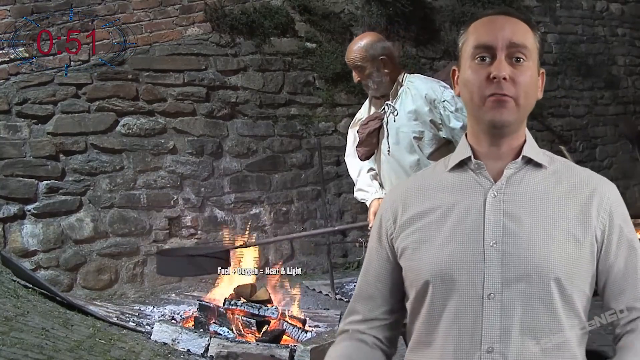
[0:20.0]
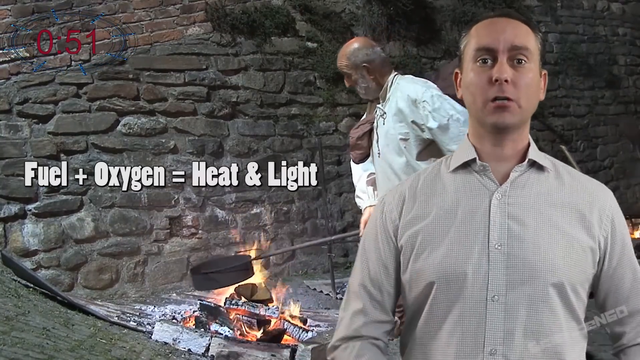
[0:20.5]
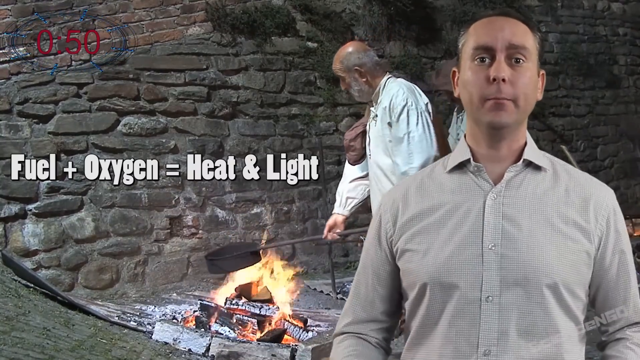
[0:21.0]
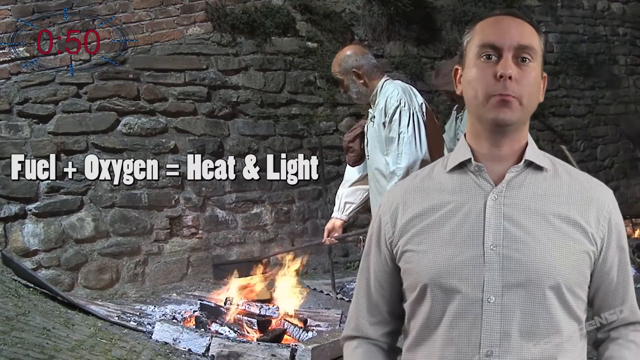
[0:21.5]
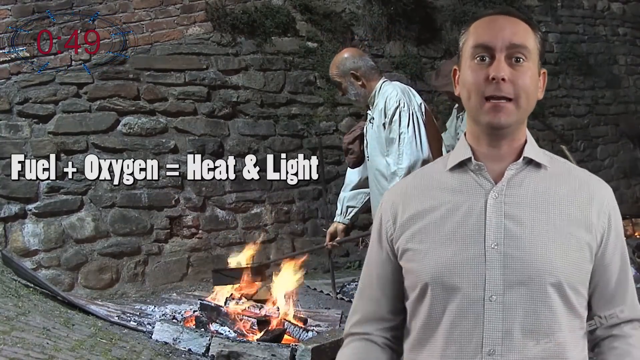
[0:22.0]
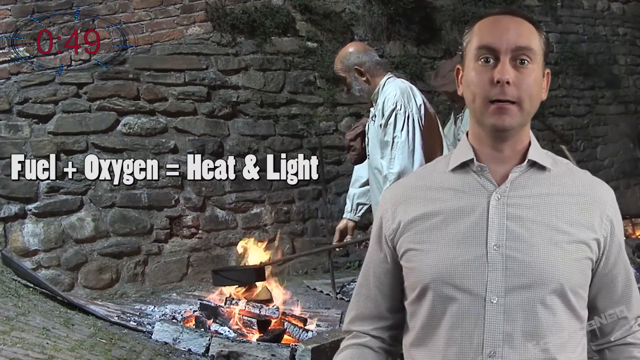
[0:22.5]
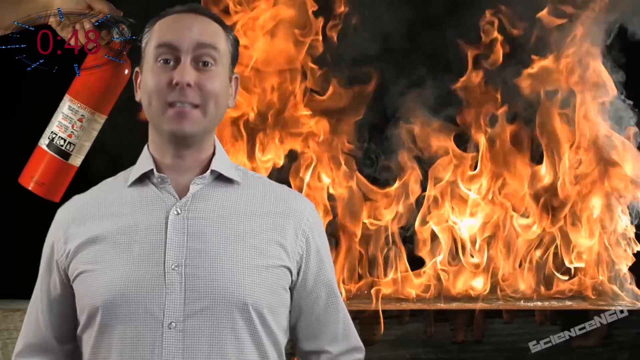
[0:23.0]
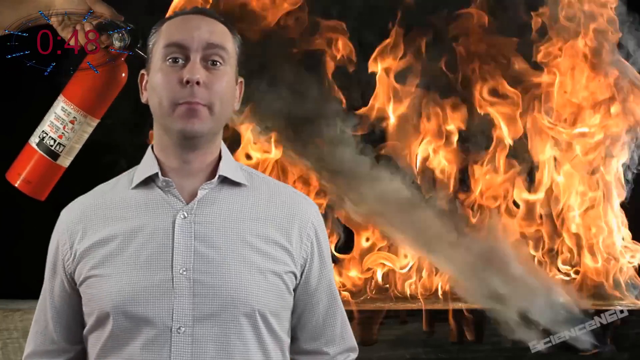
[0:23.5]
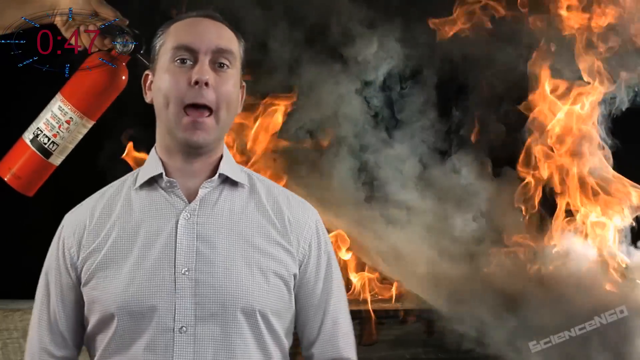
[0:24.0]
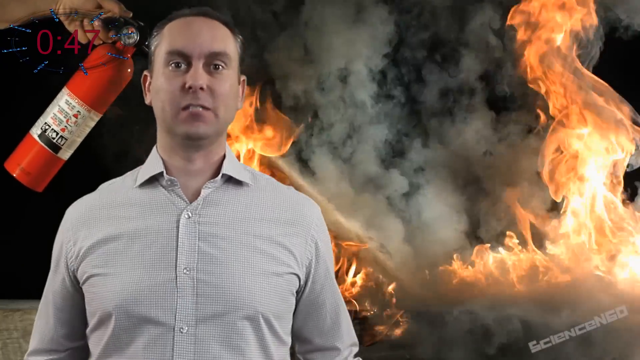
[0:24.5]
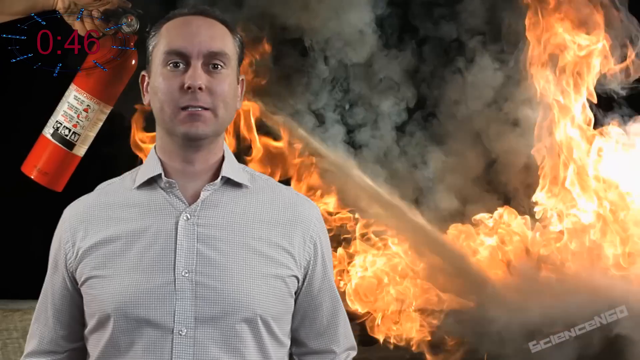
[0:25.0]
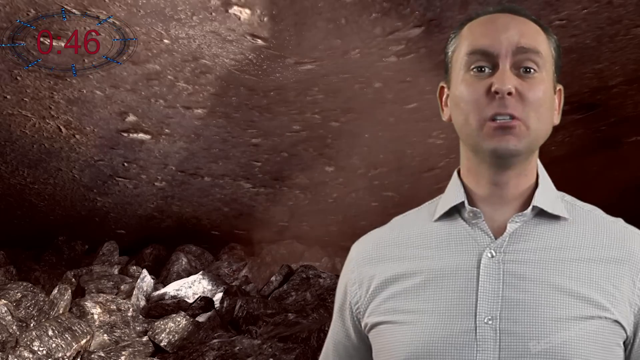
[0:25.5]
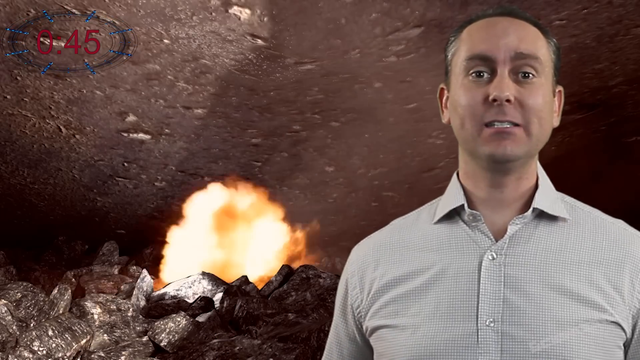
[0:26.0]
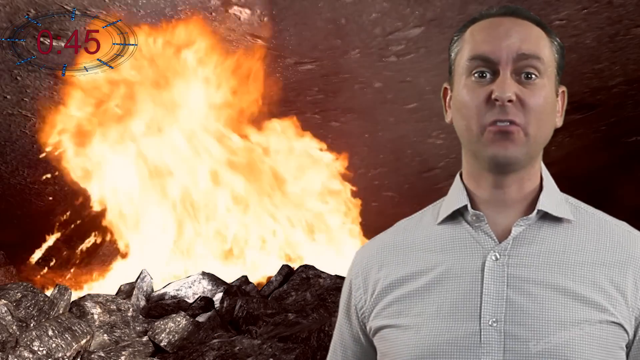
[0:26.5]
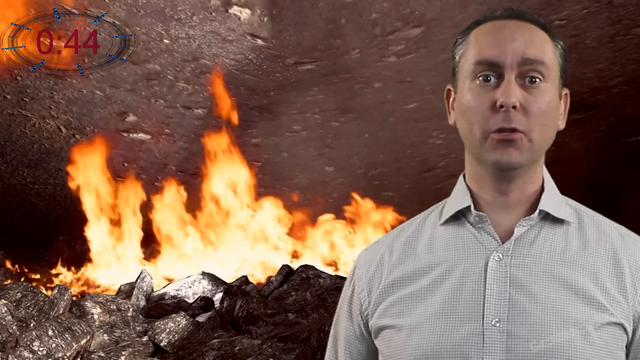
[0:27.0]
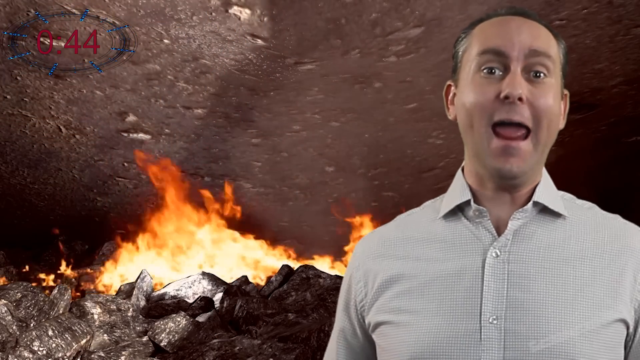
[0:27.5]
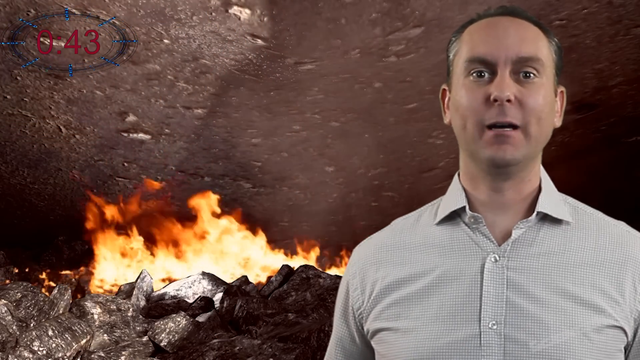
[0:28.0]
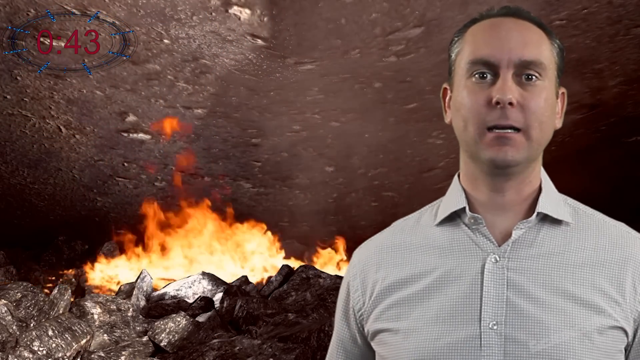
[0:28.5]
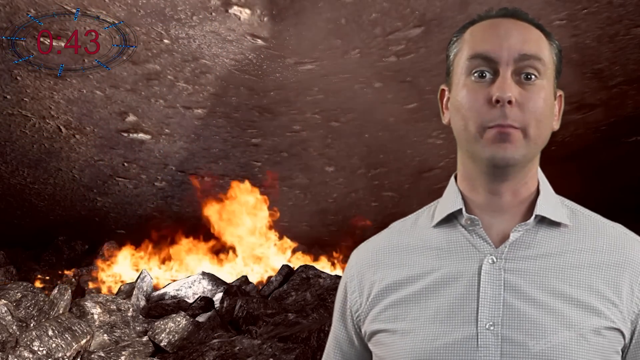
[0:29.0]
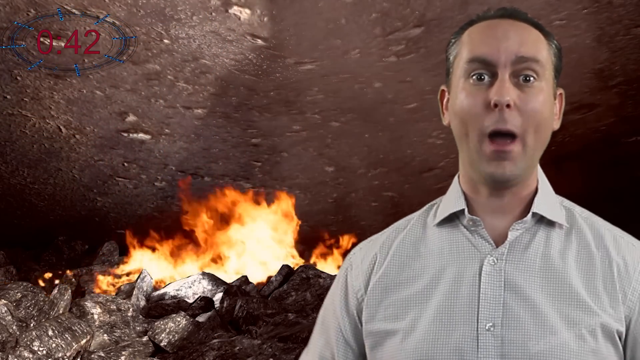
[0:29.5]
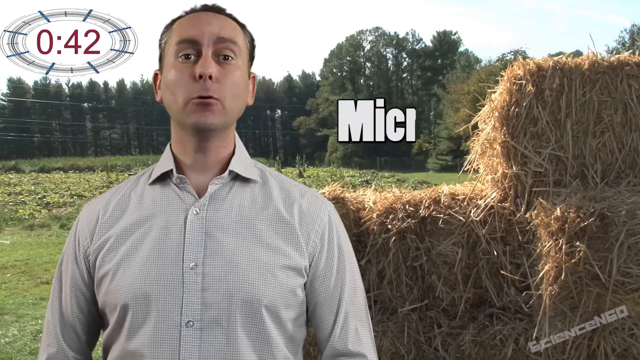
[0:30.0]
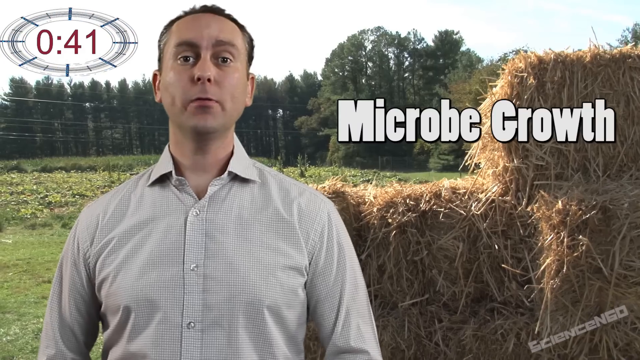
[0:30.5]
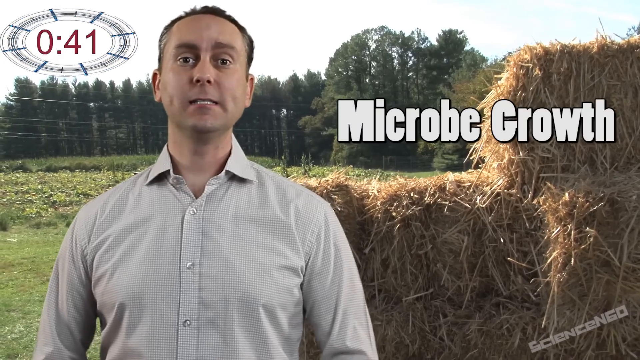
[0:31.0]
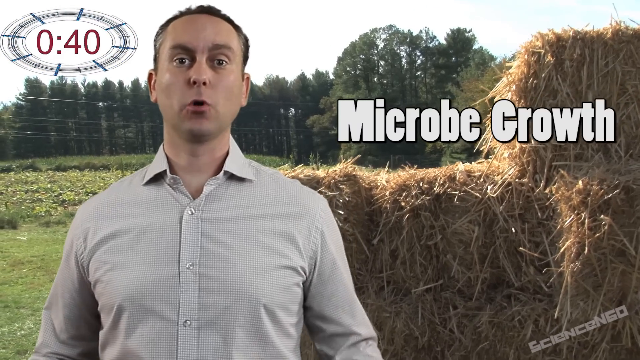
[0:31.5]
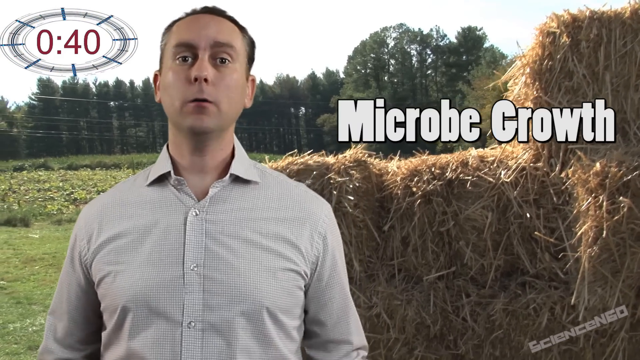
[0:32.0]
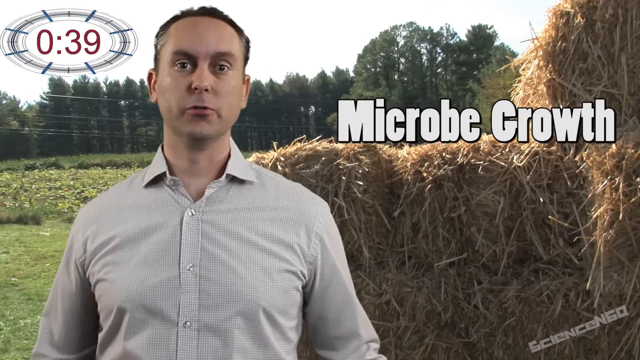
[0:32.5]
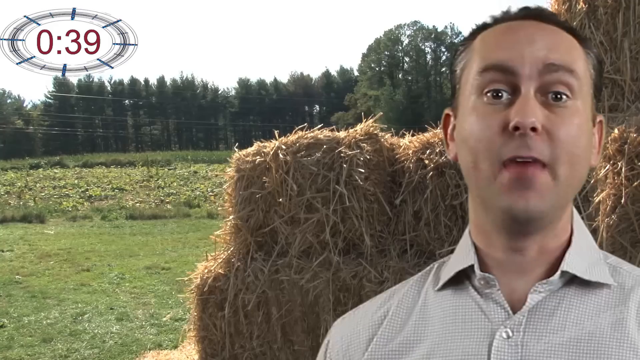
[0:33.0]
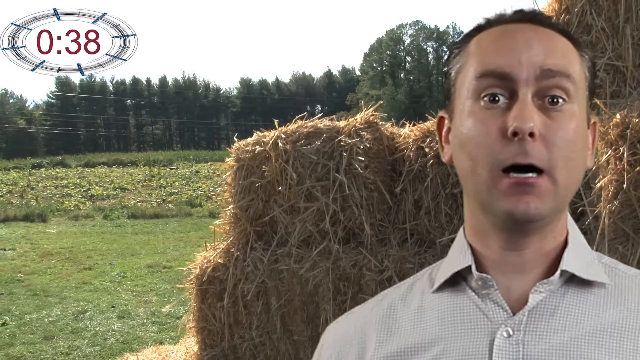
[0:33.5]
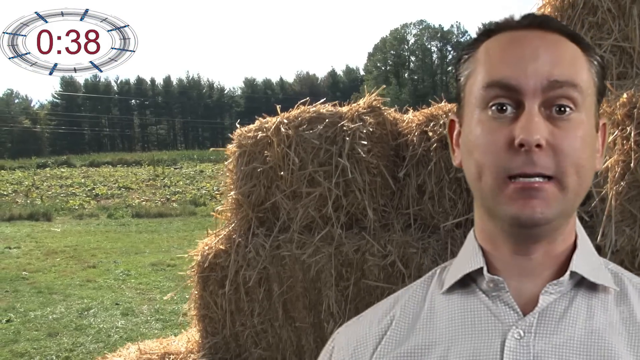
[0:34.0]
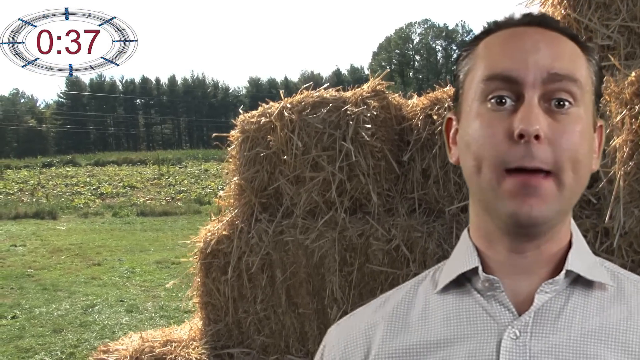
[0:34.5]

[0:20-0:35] A spokesperson continues talking while images of a man cooking over a fire are shown, followed by images of what looks like hay or straw with the text "microbe growth." There are also images of a man twirling fire, and the text "methane natural enzymes" appears.